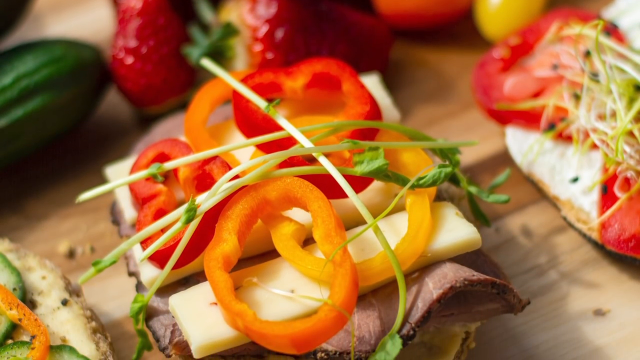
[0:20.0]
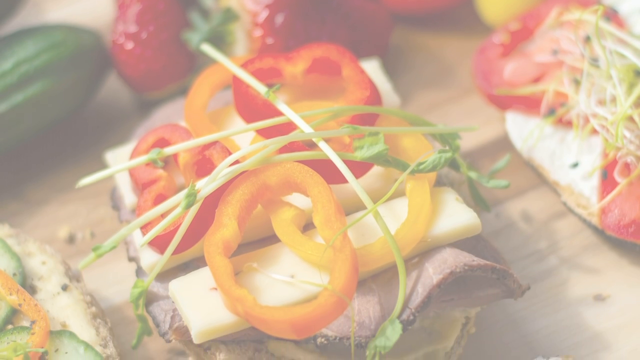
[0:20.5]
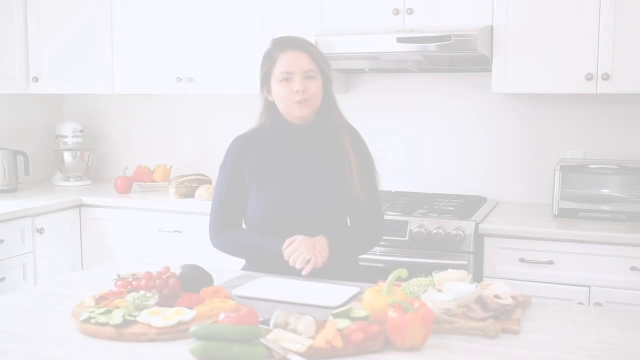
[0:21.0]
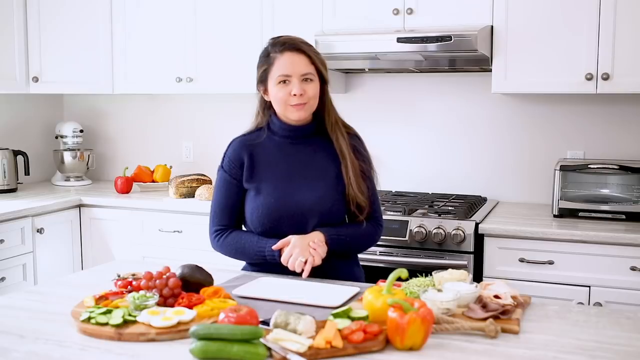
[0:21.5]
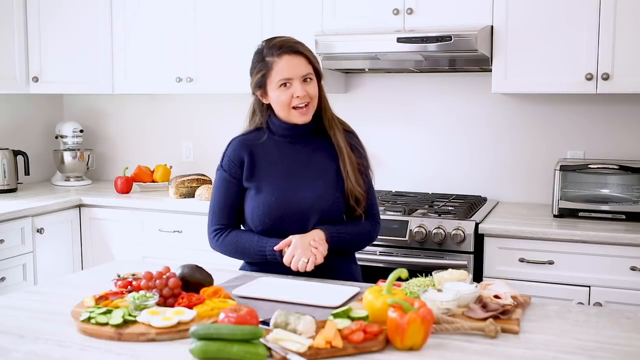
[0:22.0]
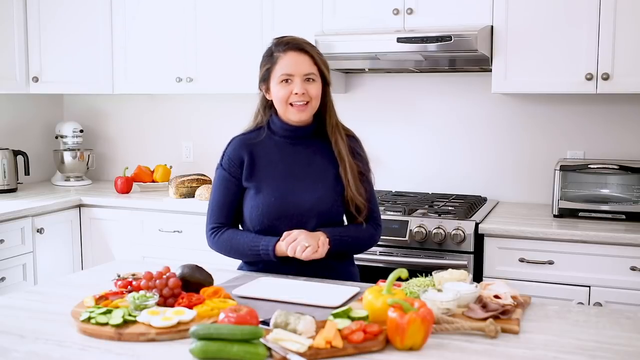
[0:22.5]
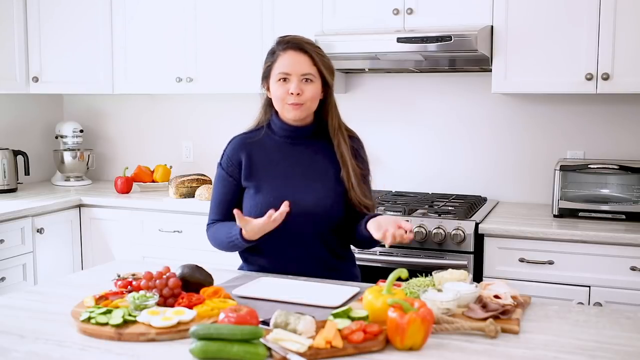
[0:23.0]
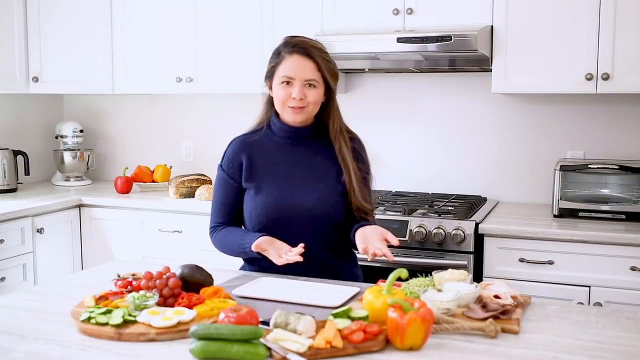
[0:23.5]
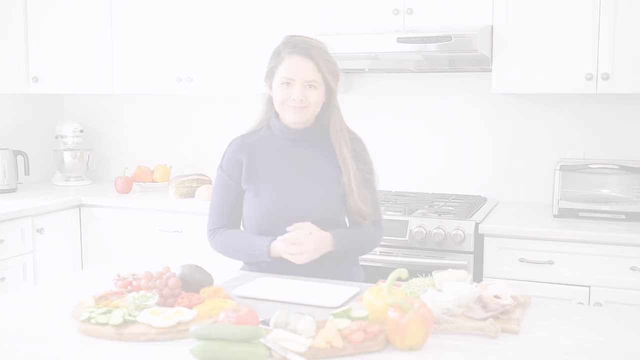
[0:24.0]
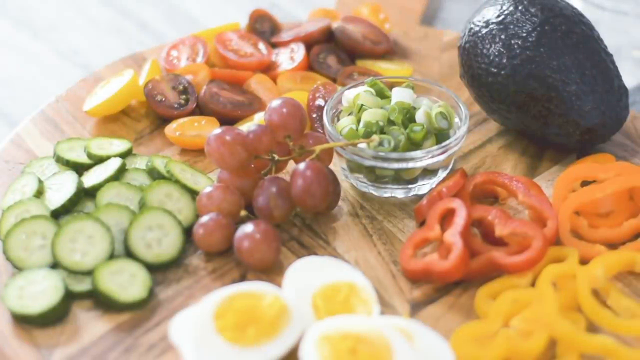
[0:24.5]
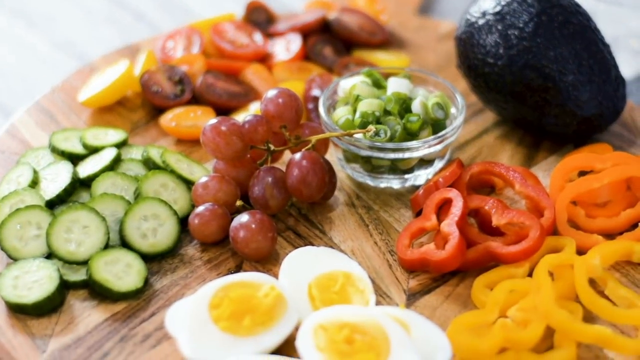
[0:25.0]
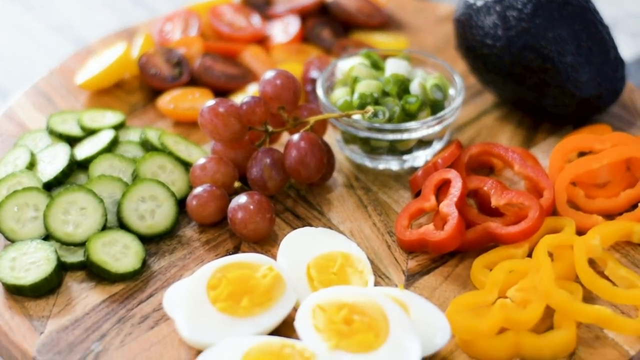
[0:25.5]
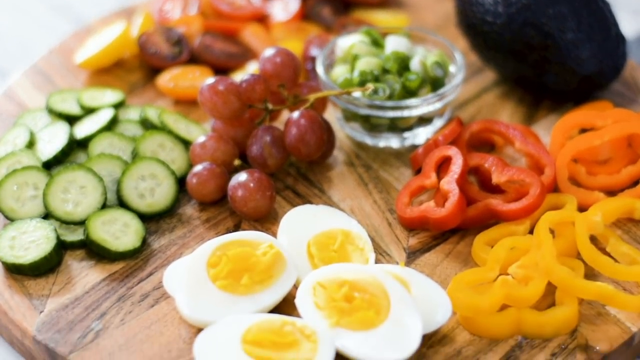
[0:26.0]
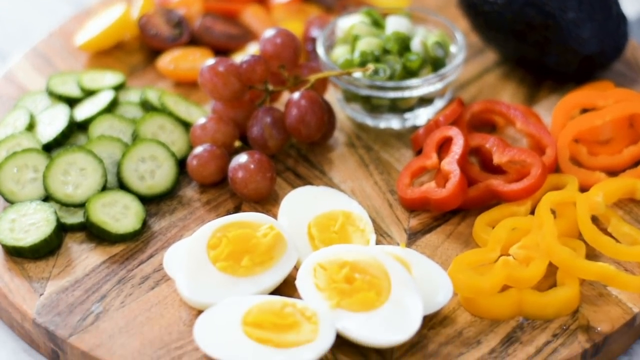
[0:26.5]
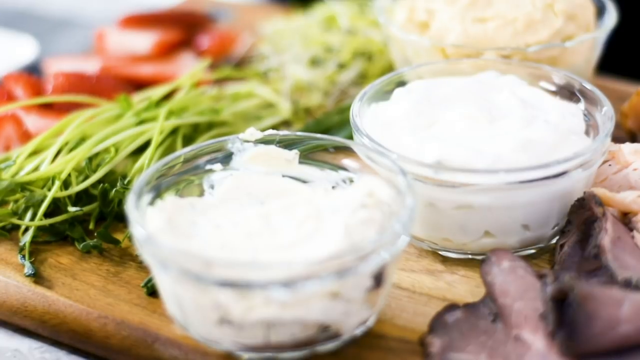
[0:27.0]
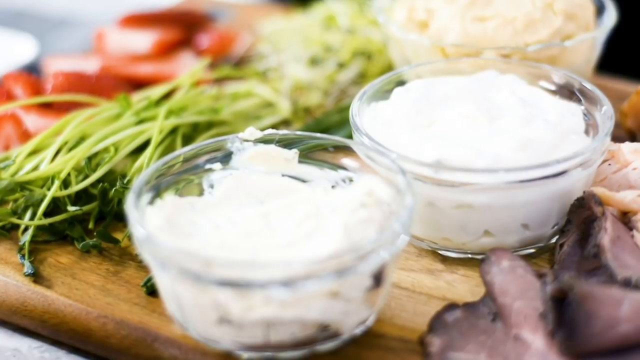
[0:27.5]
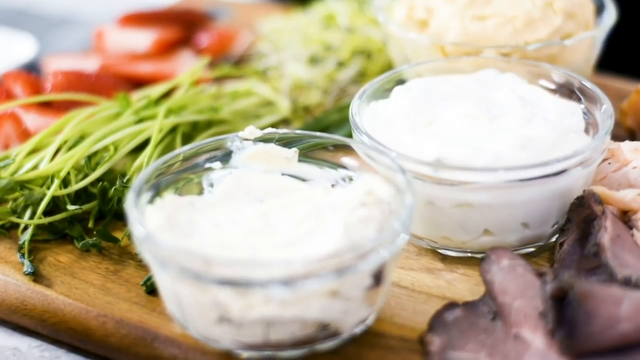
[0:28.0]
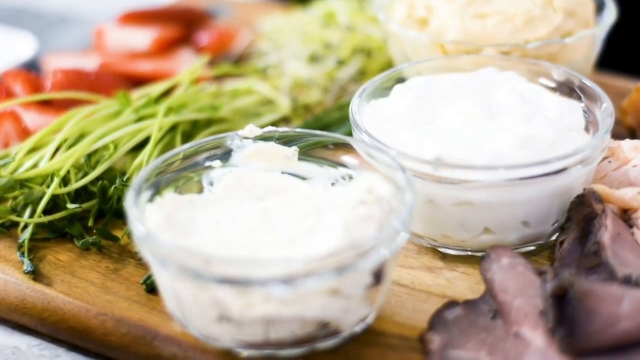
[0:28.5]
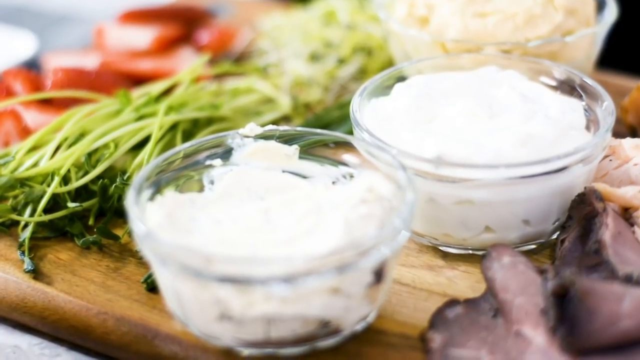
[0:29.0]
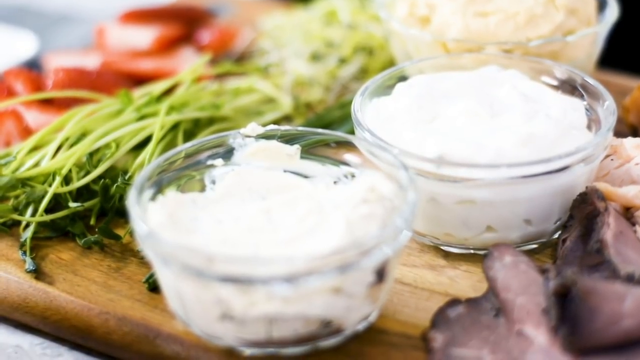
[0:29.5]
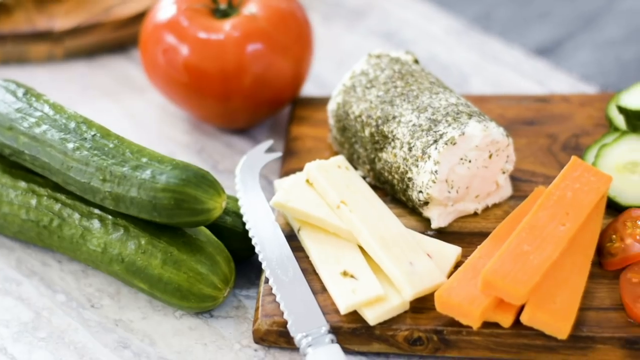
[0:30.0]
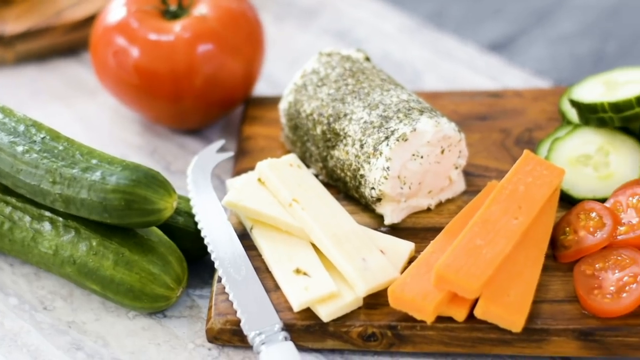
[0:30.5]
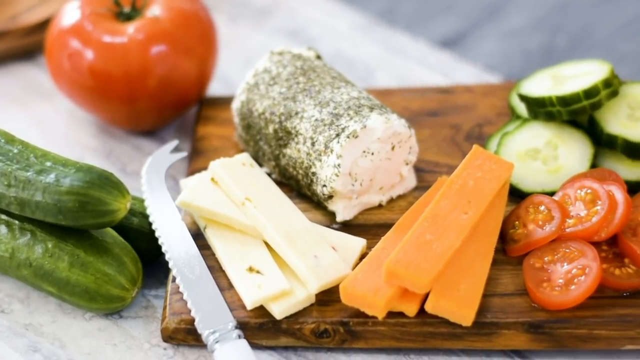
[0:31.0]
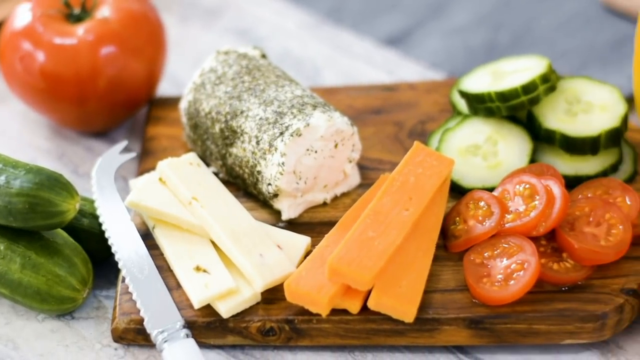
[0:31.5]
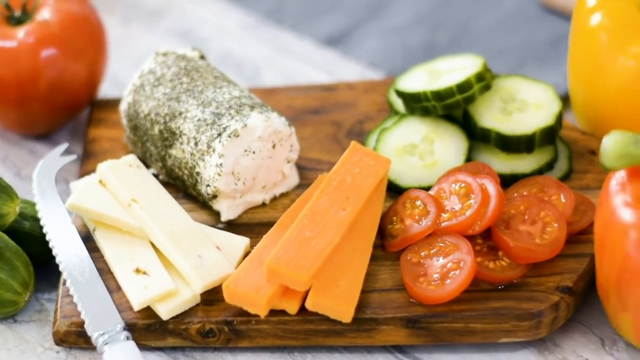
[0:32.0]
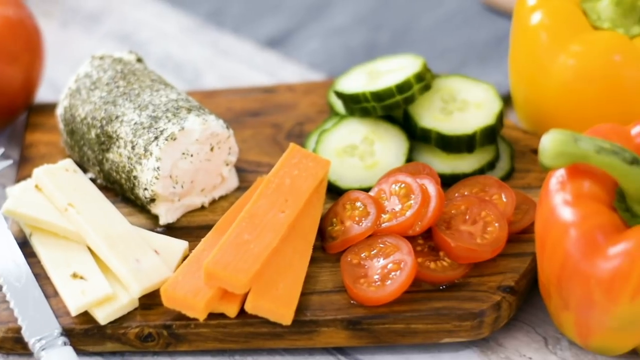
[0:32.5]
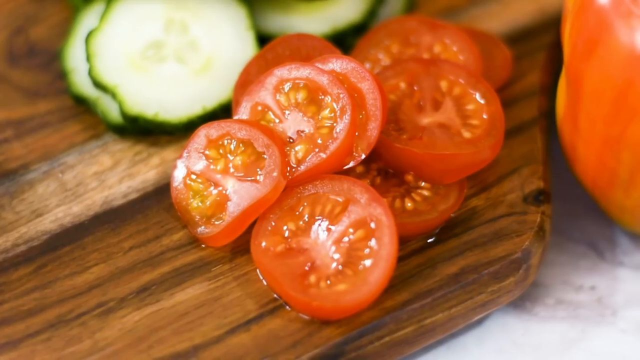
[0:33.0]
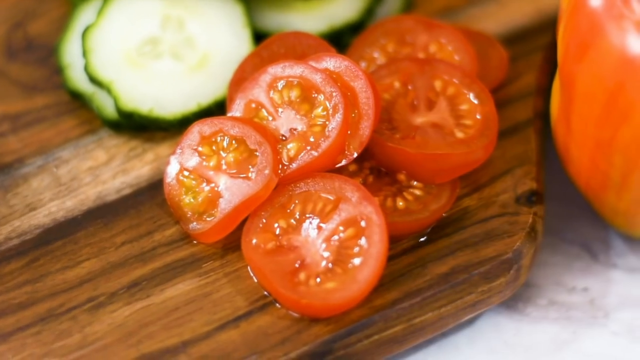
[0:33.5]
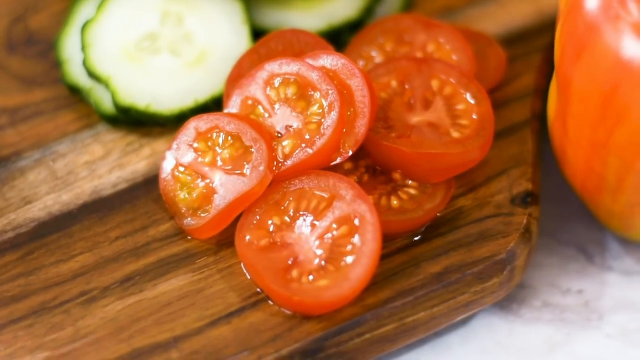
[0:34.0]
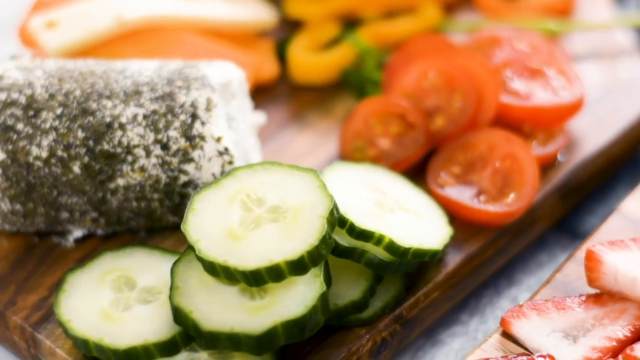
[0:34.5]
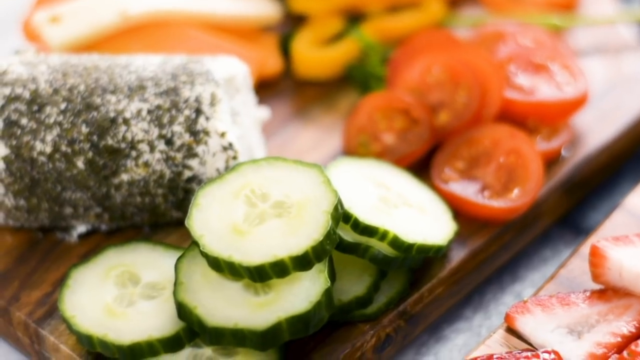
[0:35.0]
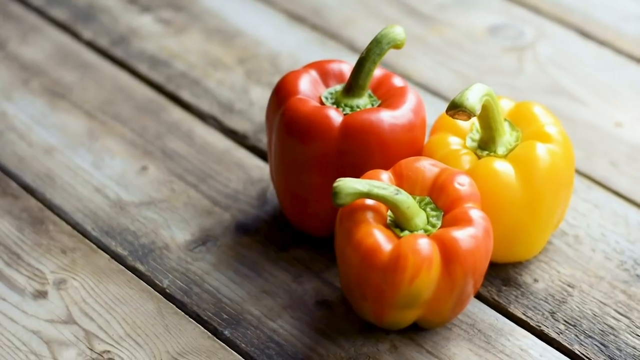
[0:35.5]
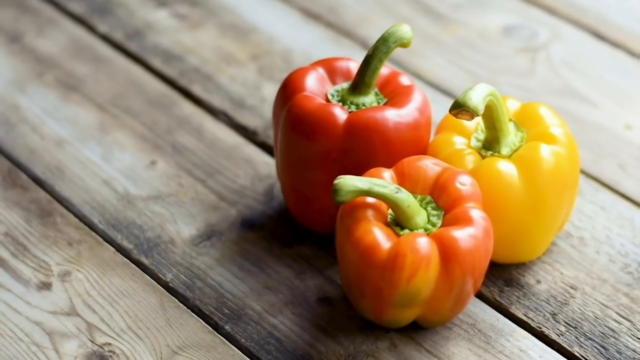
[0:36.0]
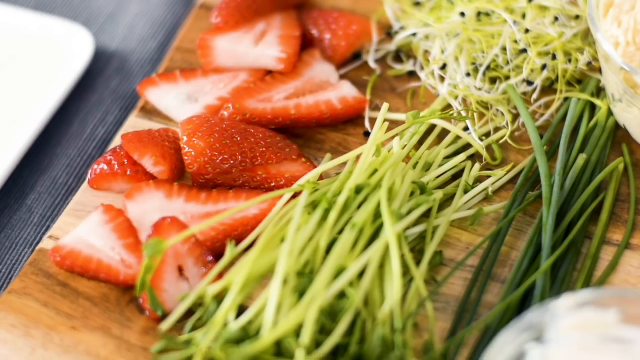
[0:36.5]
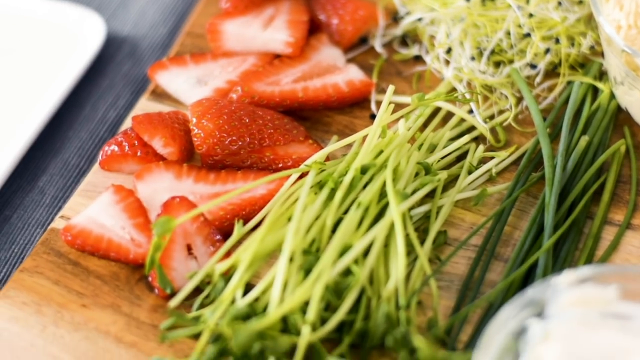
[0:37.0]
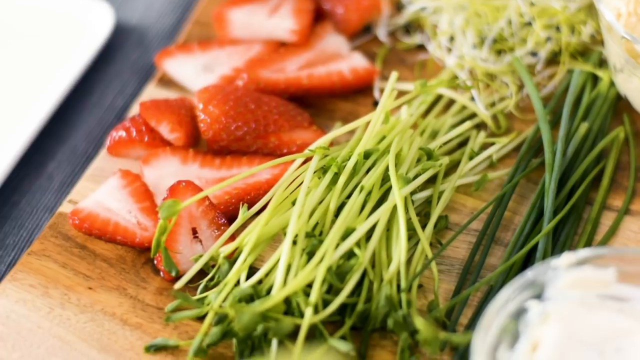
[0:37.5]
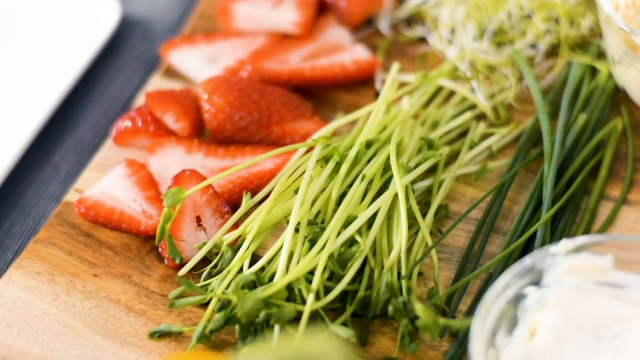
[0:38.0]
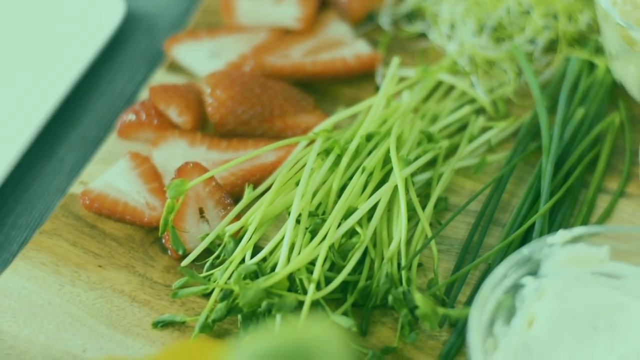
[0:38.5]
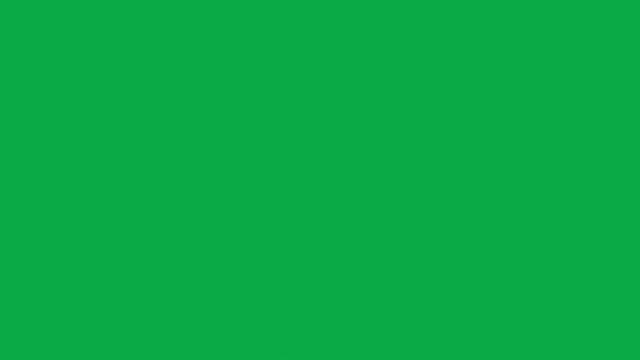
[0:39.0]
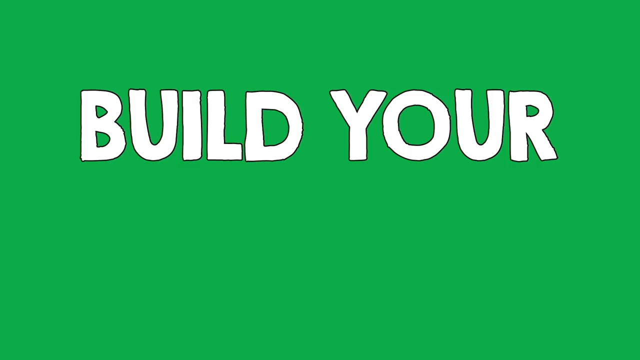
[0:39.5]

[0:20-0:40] The woman in the kitchen uses her hands as she gives an illustration, demonstrating. The camera zooms closely into the chopped ingredients: some pepper, some tomatoes, and boiled eggs chopped into pieces. There are two plates and glass pots holding some squeezed yam, along with yam, tomatoes and chopped pepper on the table, ready to be used. The title "build your sandwich" appears. All the ingredients are set out on the table and on the chopping boards, ready for her to start making her sandwich.